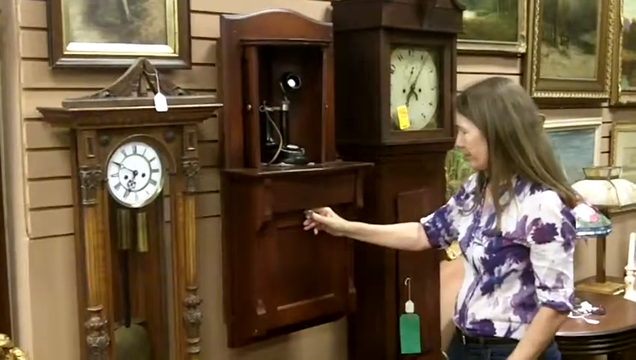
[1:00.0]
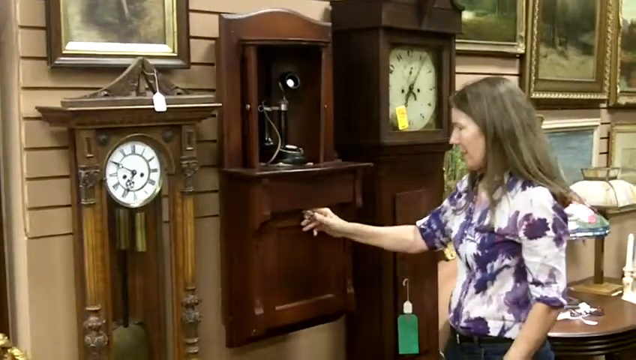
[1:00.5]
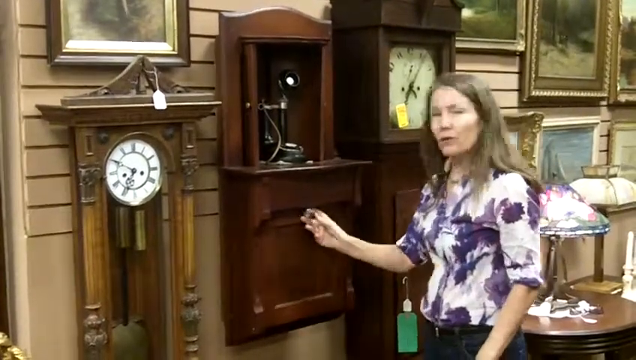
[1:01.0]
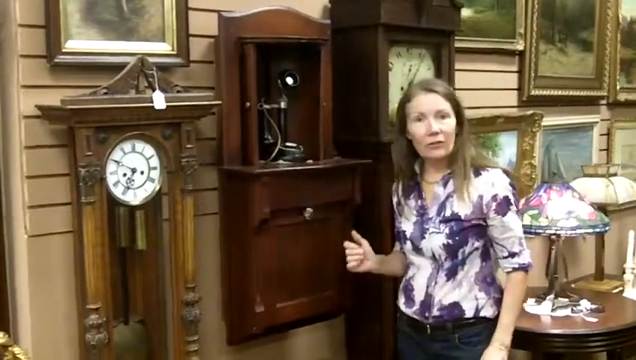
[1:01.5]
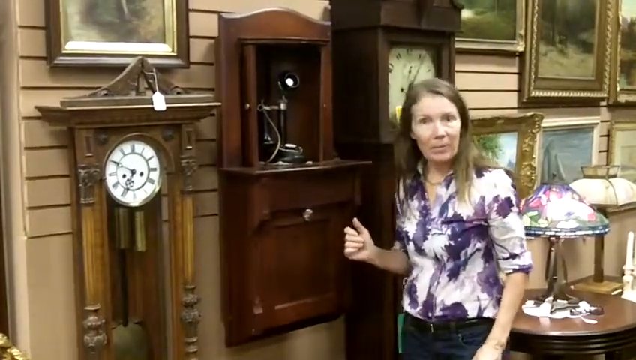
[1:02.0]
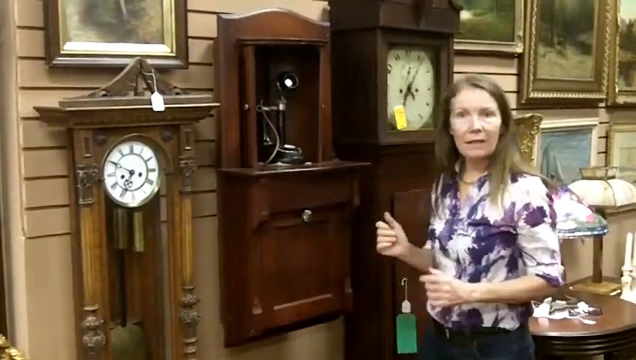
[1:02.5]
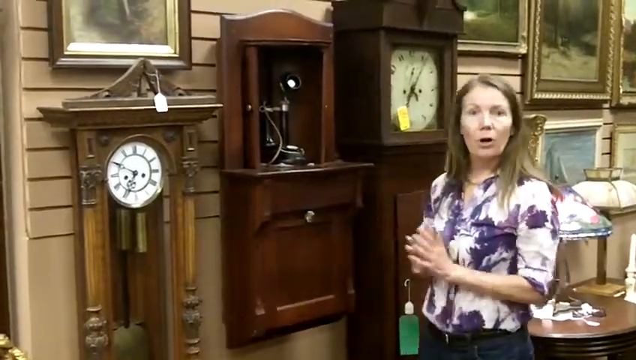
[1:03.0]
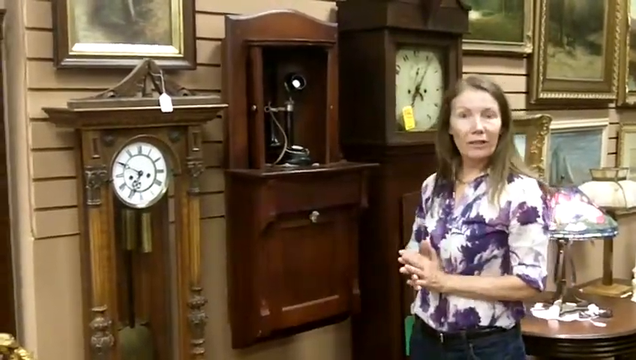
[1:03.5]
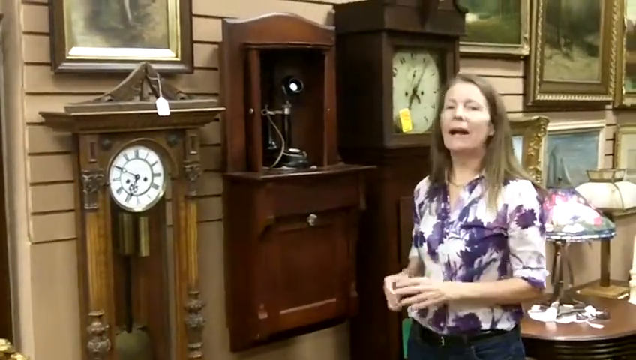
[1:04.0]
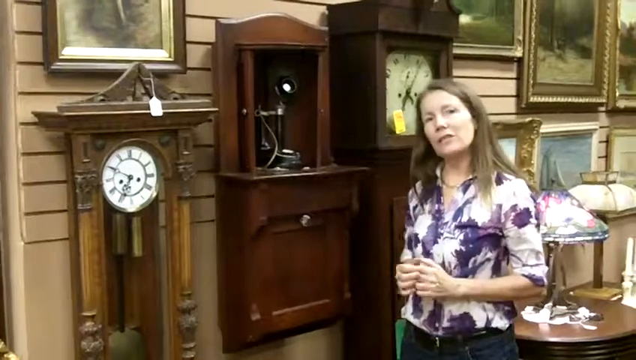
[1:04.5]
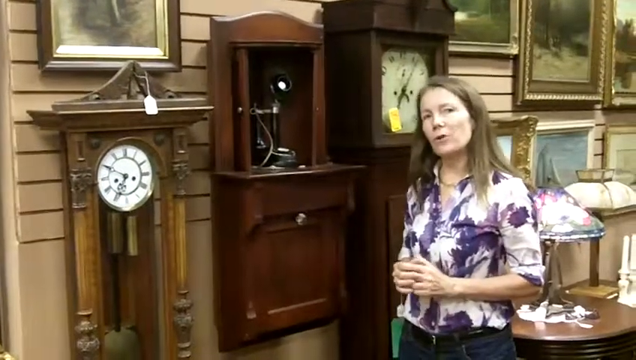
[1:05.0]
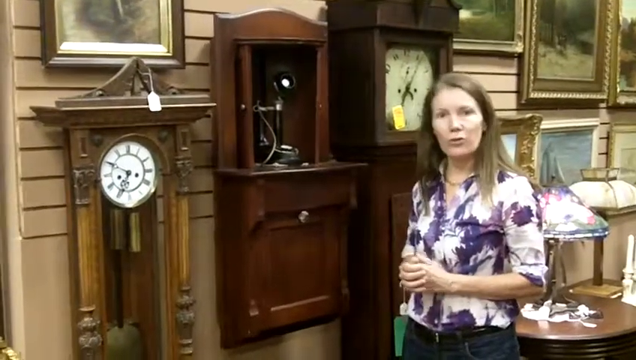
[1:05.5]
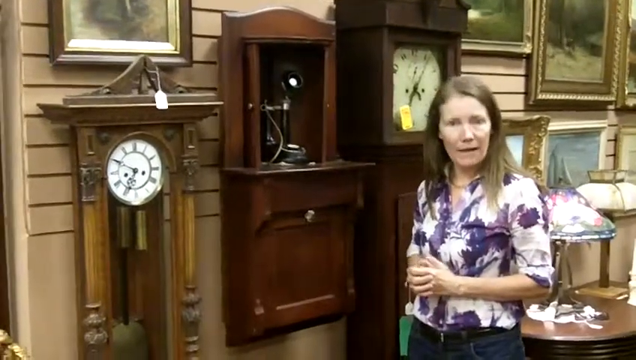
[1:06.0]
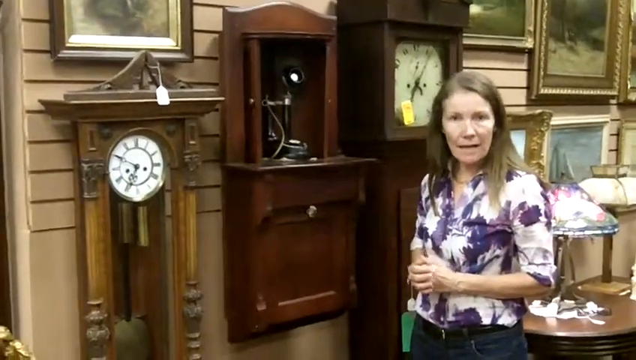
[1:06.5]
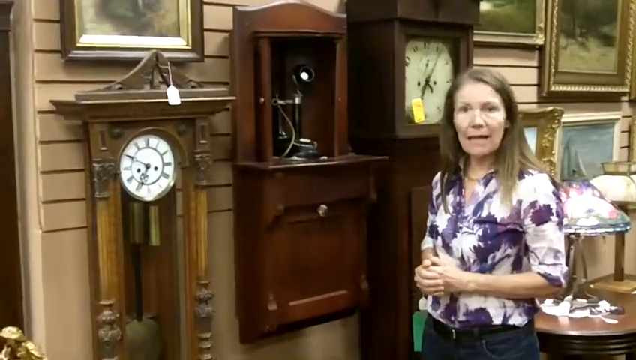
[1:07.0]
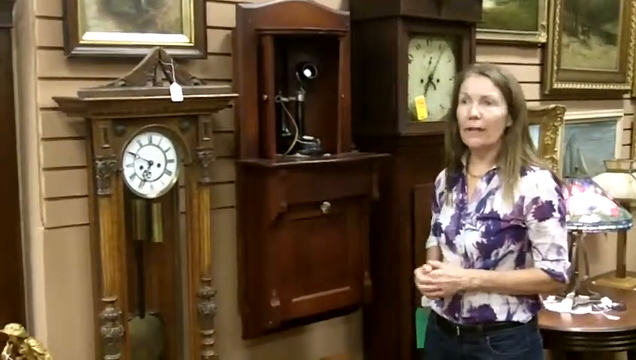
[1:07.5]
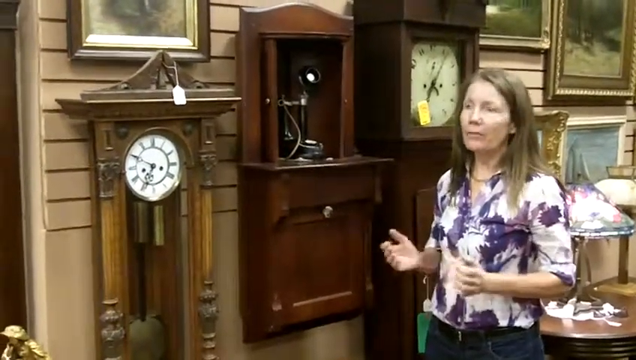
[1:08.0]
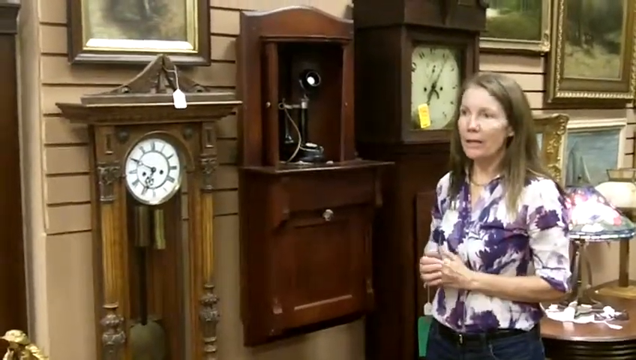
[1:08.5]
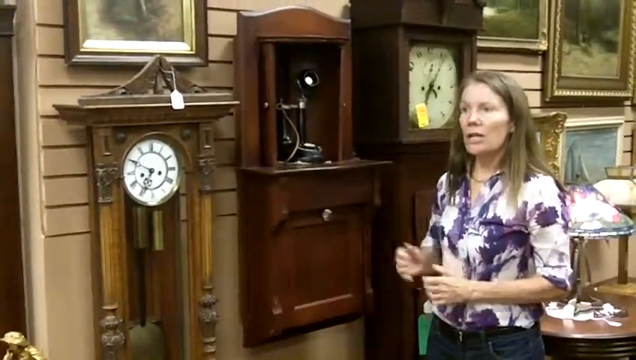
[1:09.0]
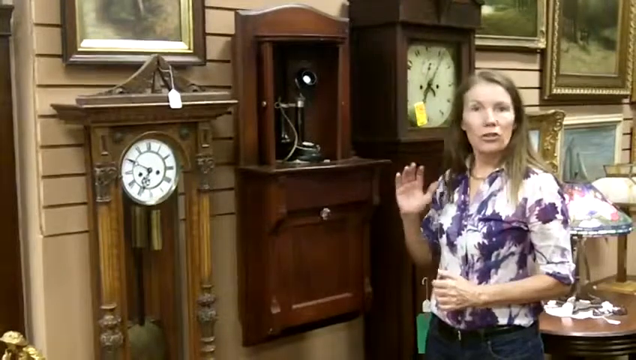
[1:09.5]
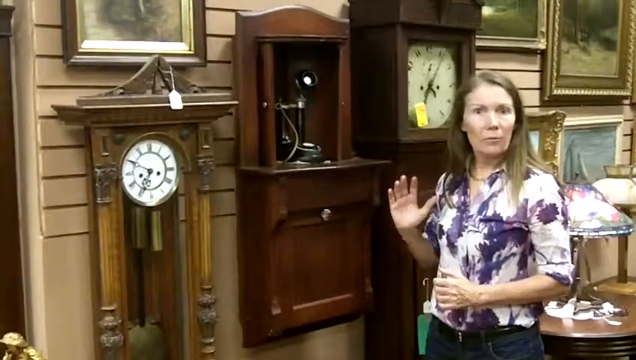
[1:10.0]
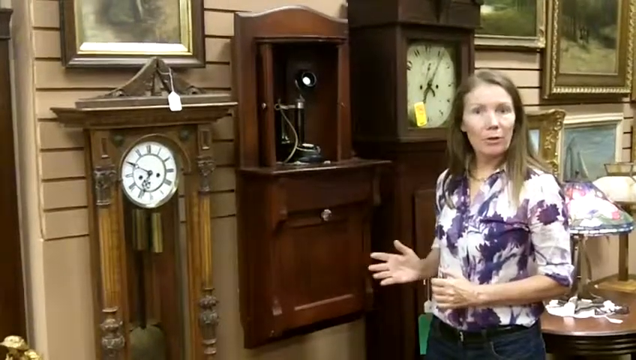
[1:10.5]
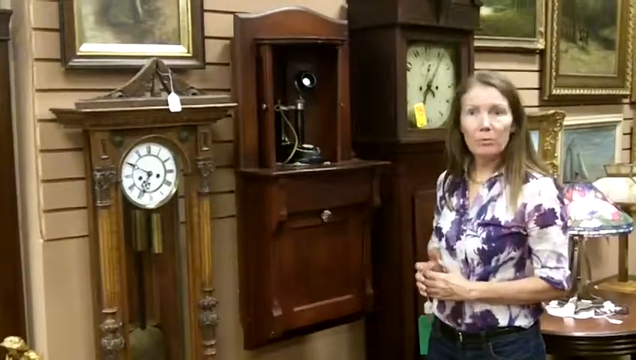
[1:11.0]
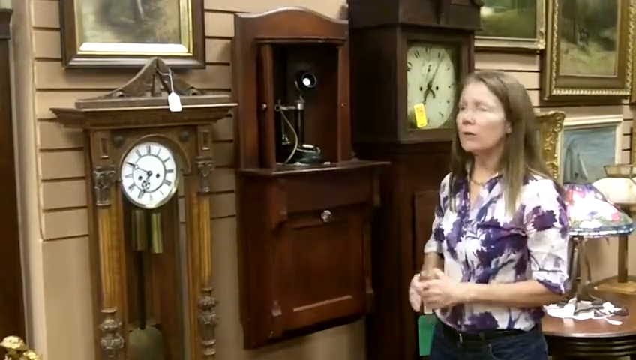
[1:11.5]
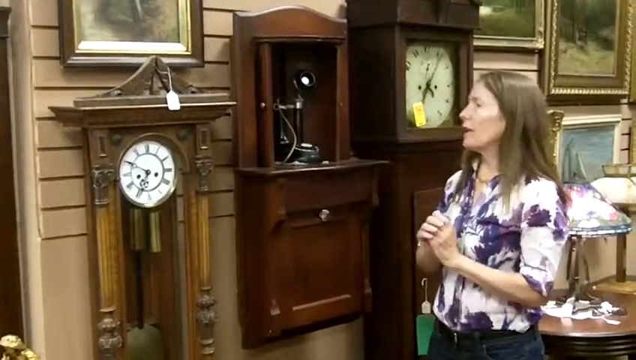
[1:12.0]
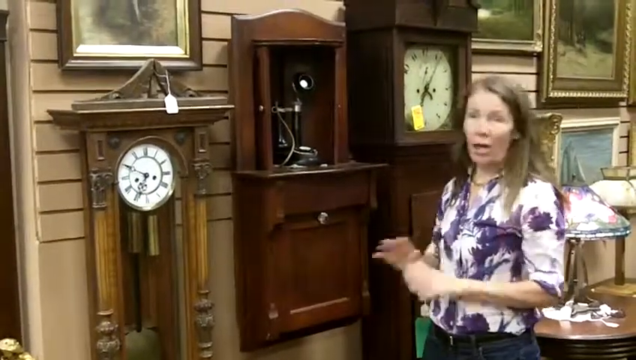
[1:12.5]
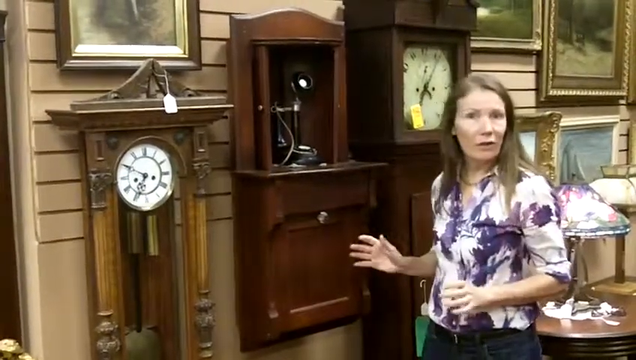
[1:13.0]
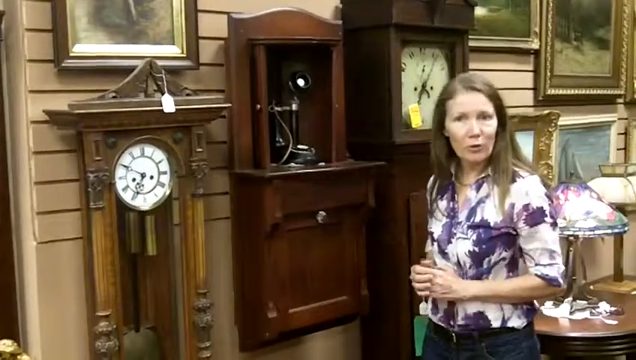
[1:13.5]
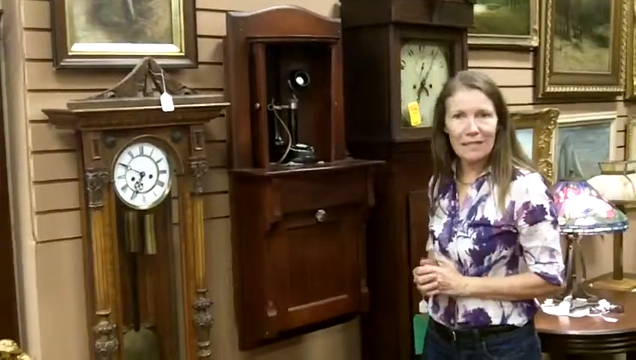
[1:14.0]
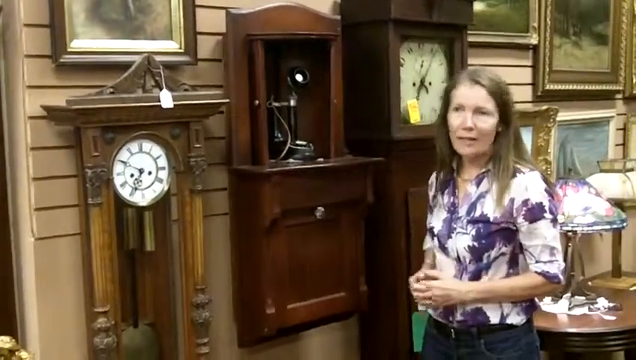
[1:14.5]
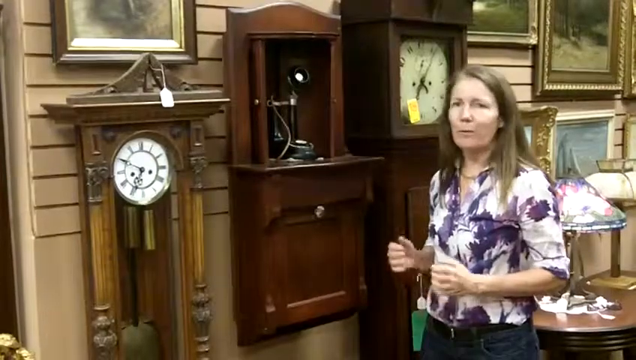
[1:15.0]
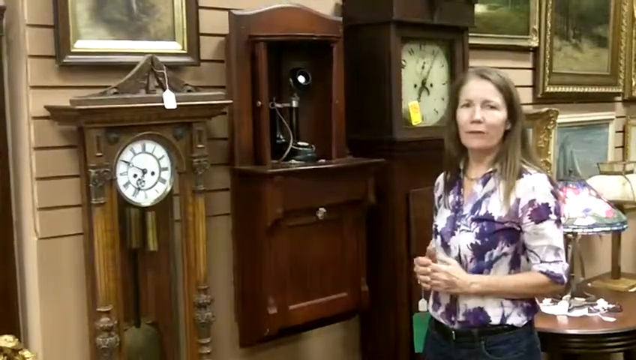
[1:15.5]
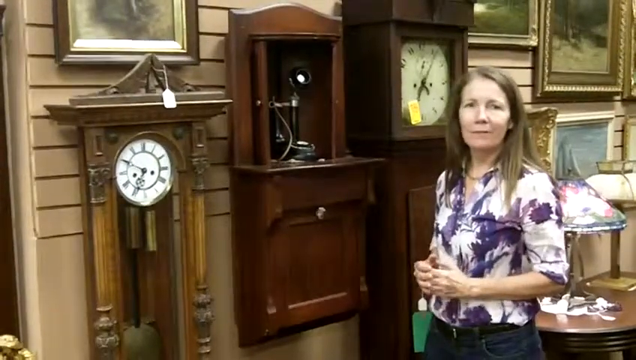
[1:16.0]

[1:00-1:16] A house decoration includes three items made of varnished wood in different shades of brown: a light brown, a deep brown, and a brownish color that looks black but is brown. The decoration has a small and a large circular clock. The wall is light brown, with framed pictures mounted on it. The white woman shows the cupboard, now opening the lower space; the top is already open, with an item inside. She looks about 49 years old and has long hair, and she keeps talking. On the table there is an item that seems to be a lamp with different colors.